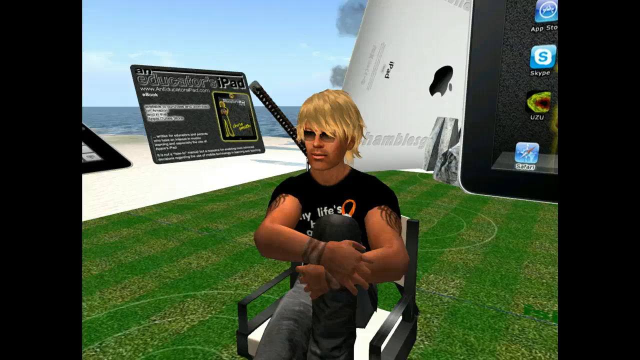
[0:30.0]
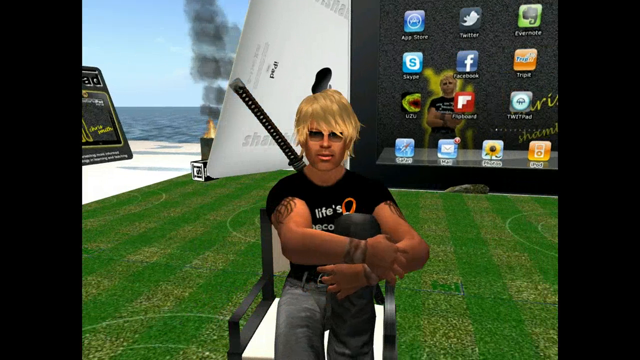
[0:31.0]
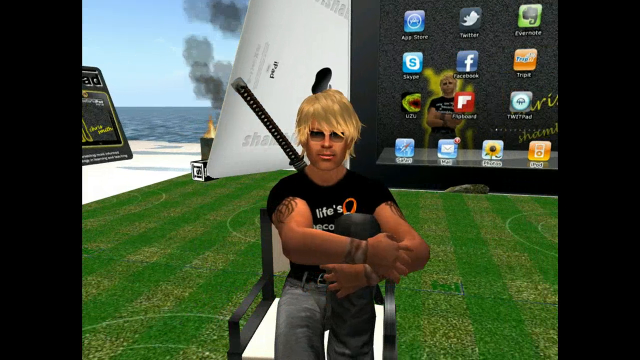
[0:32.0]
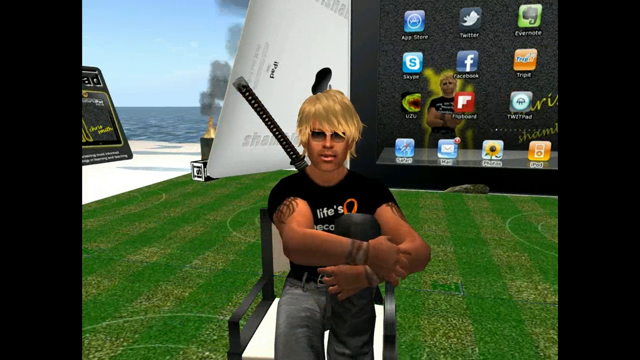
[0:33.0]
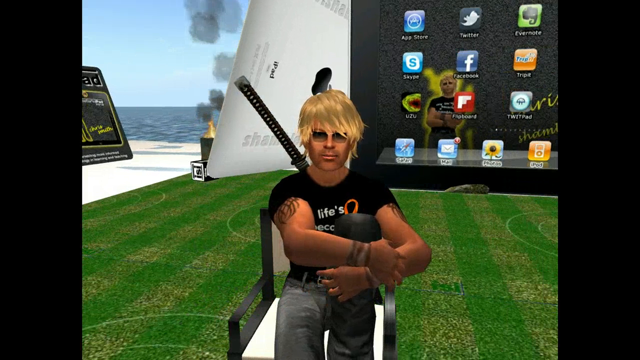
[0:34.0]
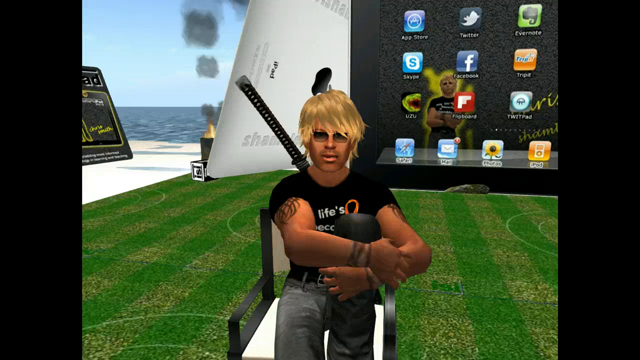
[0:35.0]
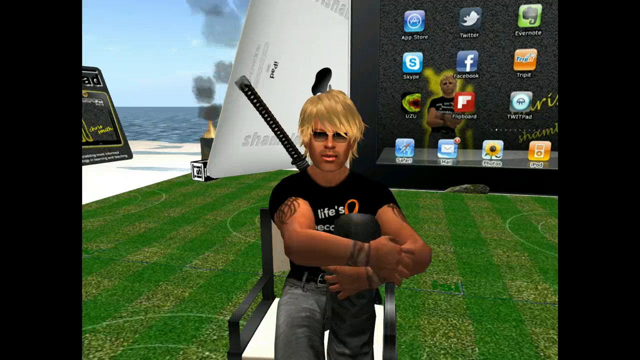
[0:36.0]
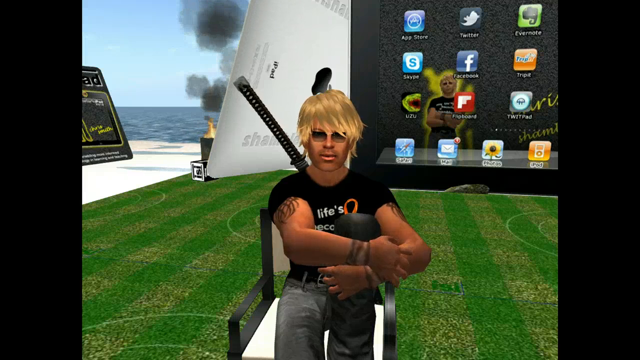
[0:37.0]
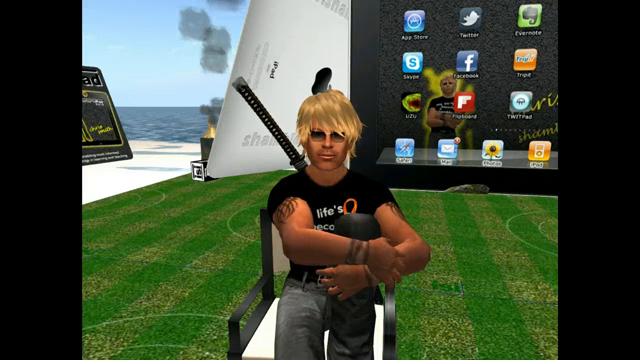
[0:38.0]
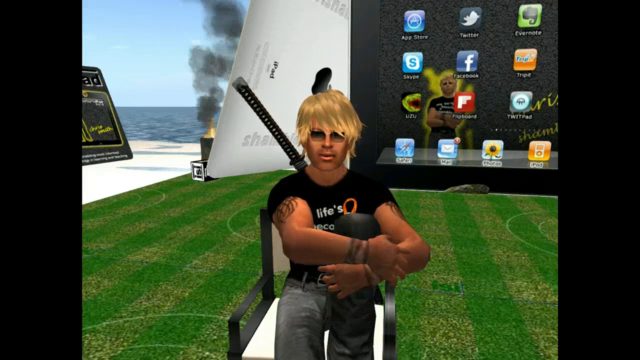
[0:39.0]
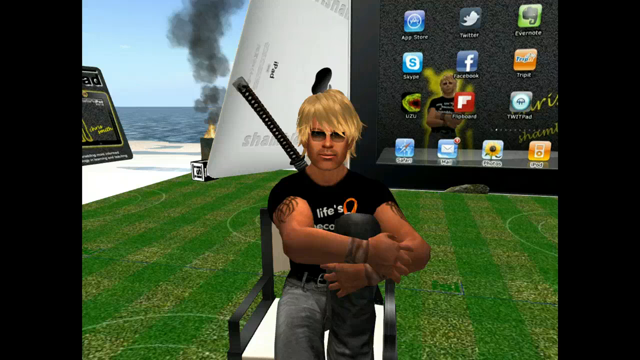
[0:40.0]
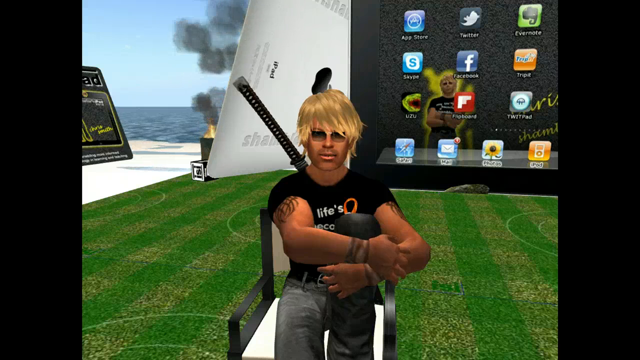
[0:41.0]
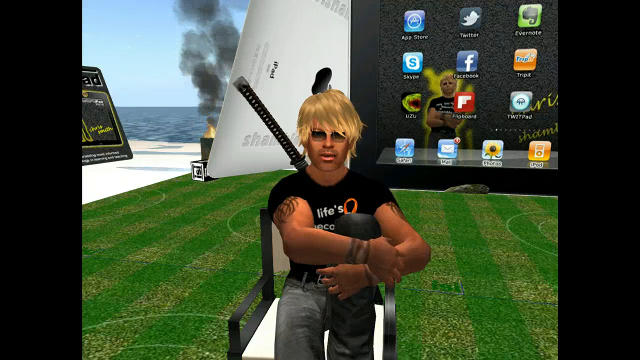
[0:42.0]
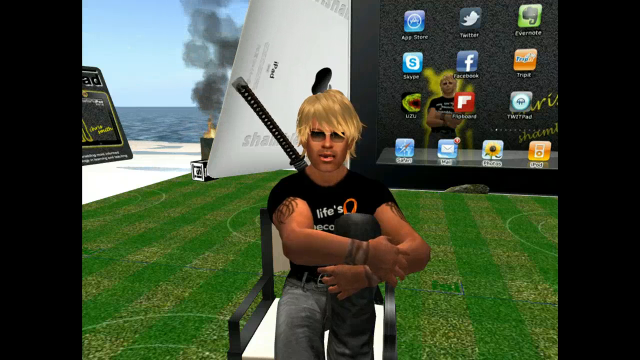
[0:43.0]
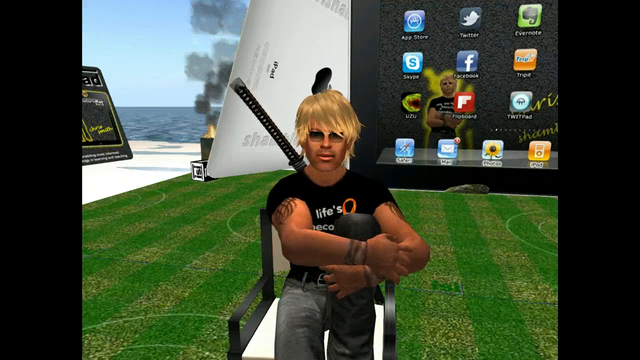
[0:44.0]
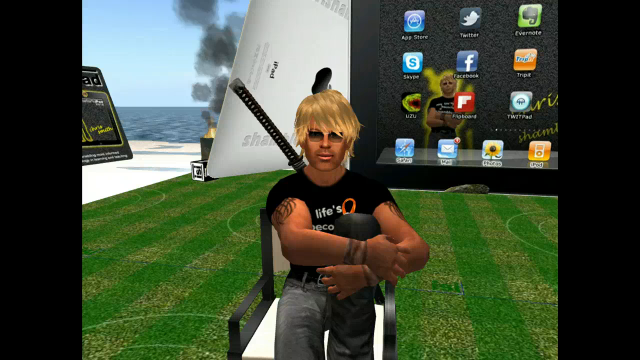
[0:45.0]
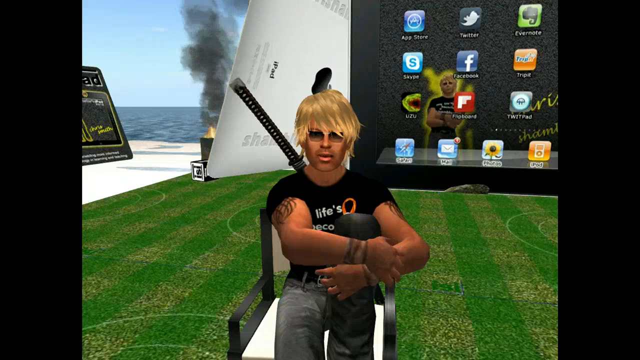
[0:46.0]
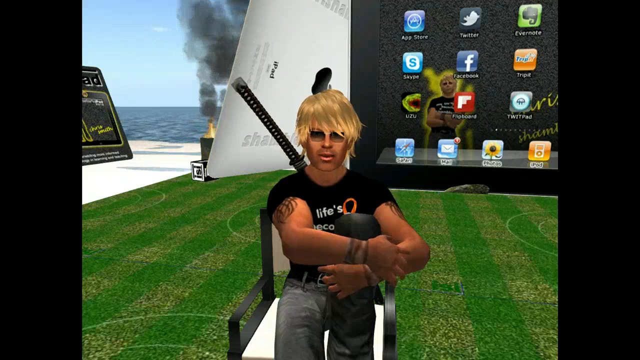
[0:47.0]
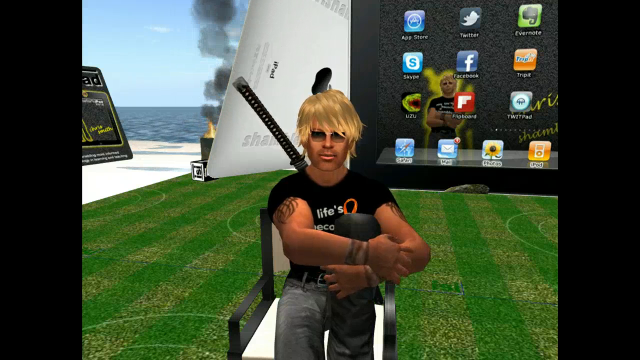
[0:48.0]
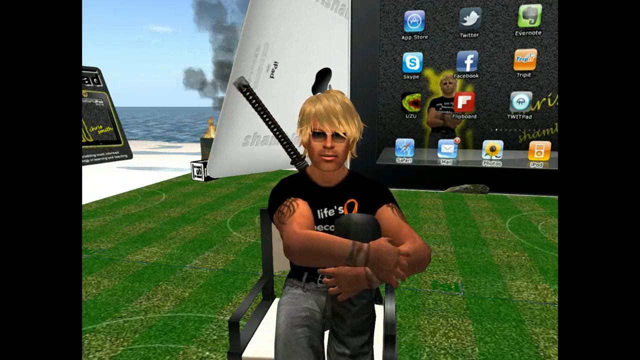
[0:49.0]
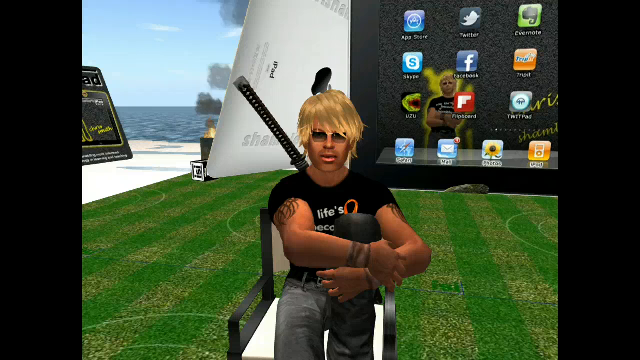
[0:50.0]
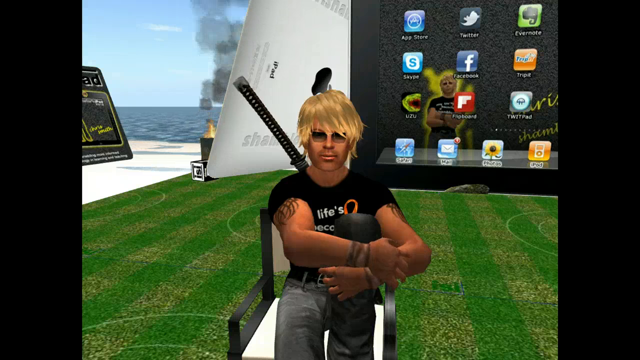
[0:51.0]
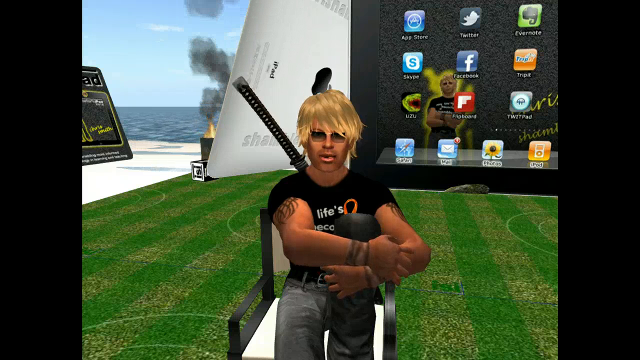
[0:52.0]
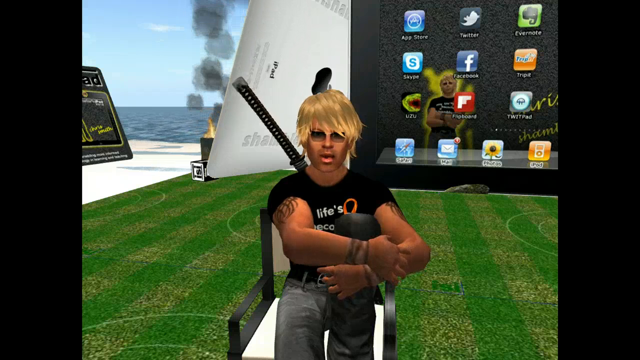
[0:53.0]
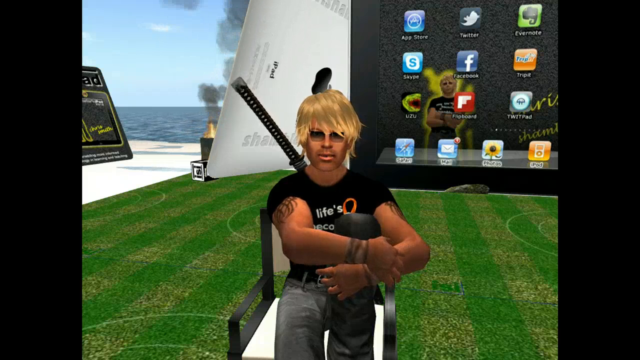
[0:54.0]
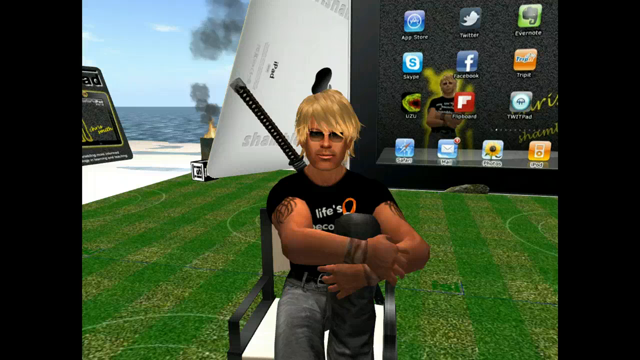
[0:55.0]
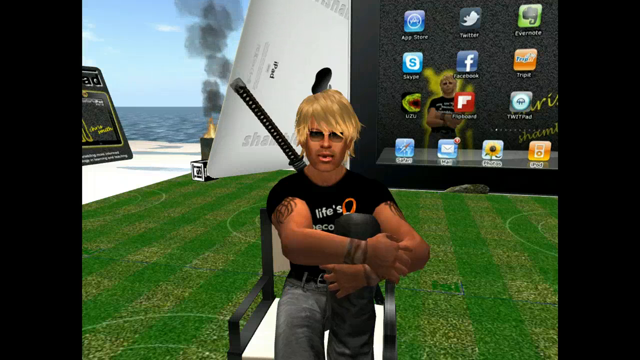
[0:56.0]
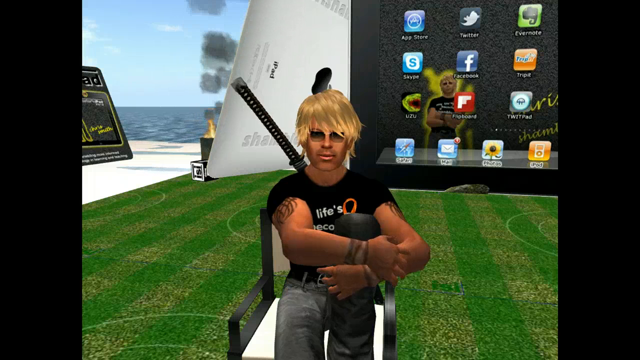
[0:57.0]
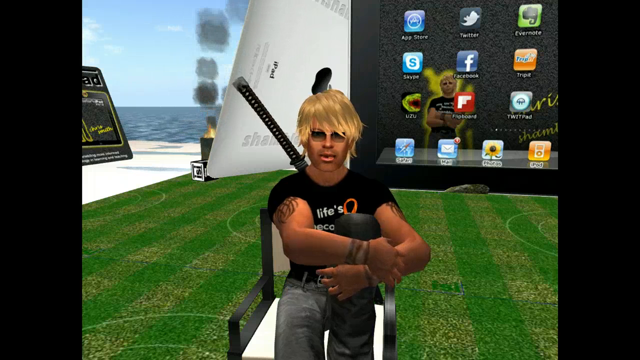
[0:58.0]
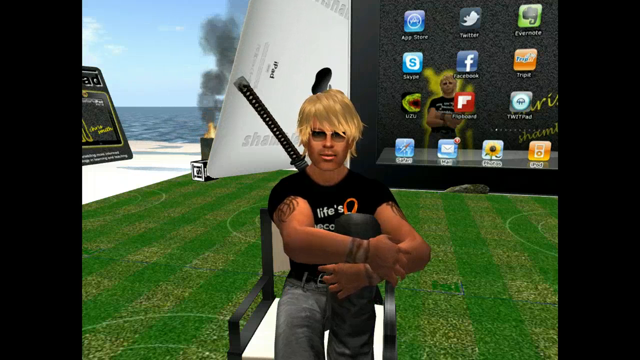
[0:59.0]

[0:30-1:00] The camera goes straight to a man sitting on a black and white chair. One of his legs is up on the chair and the other is down, and his hands are wrapped around the raised leg. He wears black jeans, a black t-shirt and a black belt. The camera keeps rotating, showing him from all different angles. Behind him is a big screen with application menus, apparently the screen of a phone or a computer. The back of an Apple screen is also visible, with smoke coming out in front of it and rising upwards. The surroundings are filled with many of these screens. His chair is on green grass, and next to the grass is a white road.